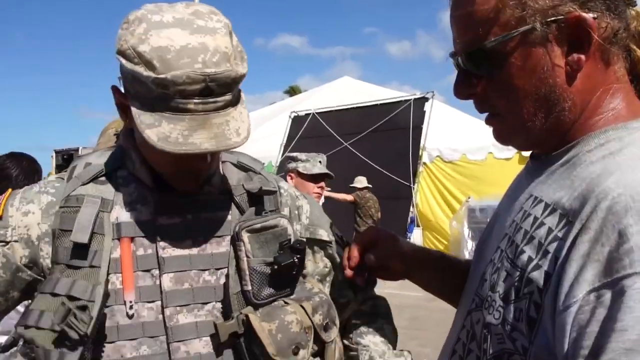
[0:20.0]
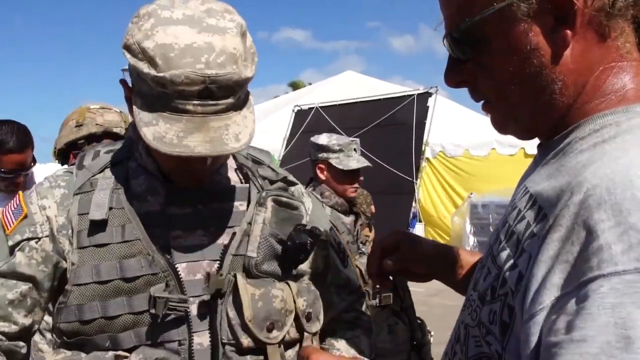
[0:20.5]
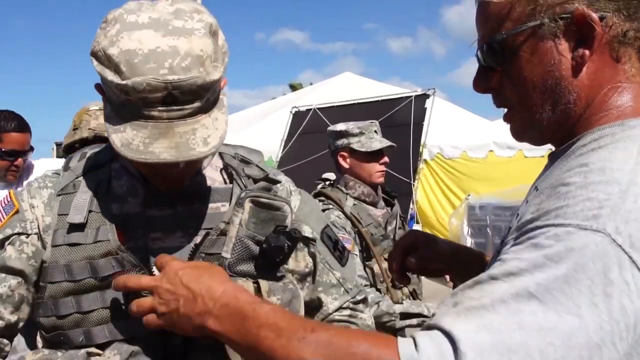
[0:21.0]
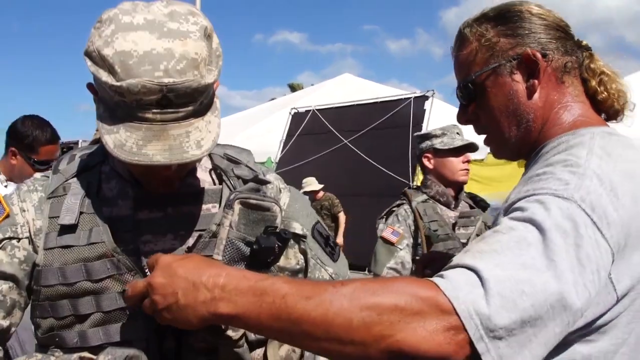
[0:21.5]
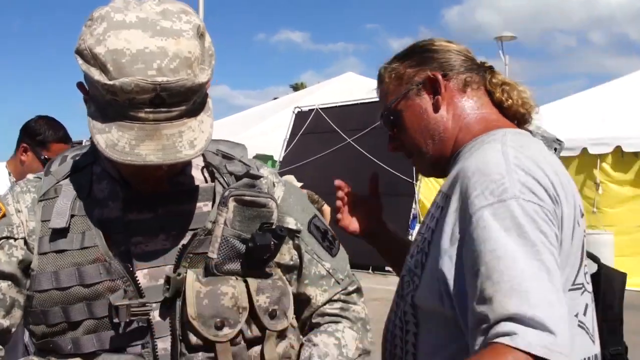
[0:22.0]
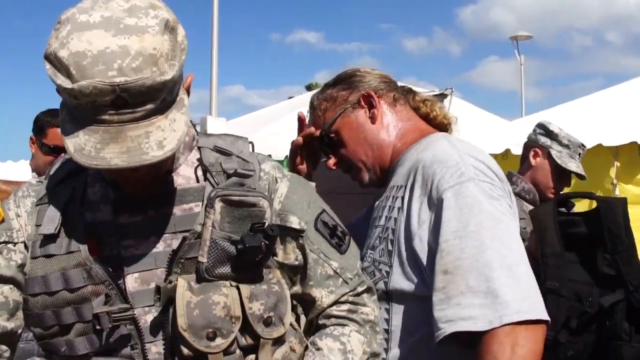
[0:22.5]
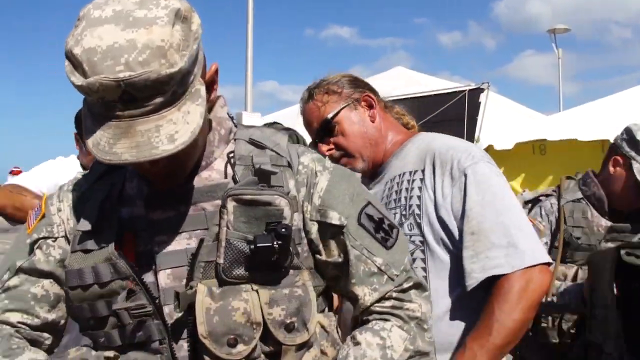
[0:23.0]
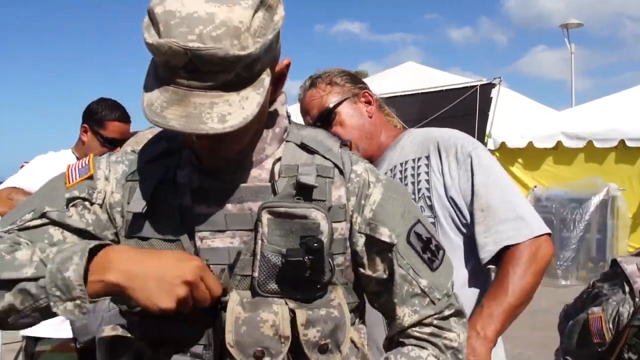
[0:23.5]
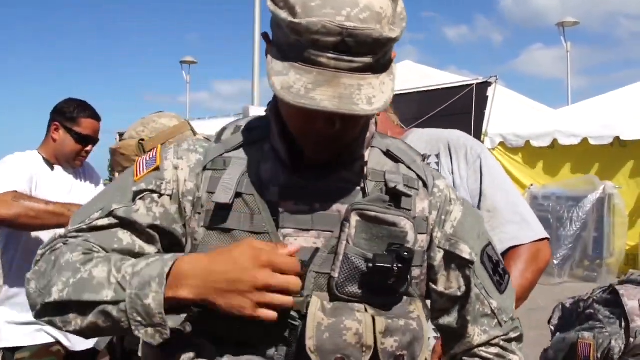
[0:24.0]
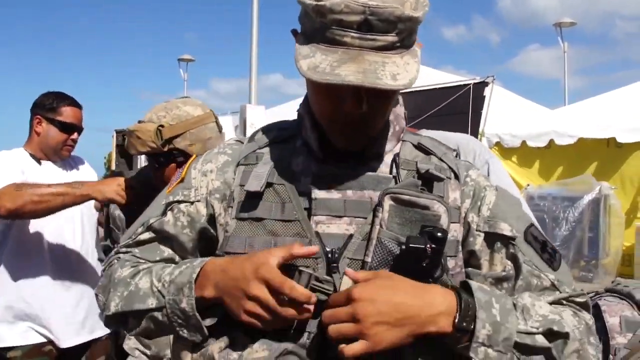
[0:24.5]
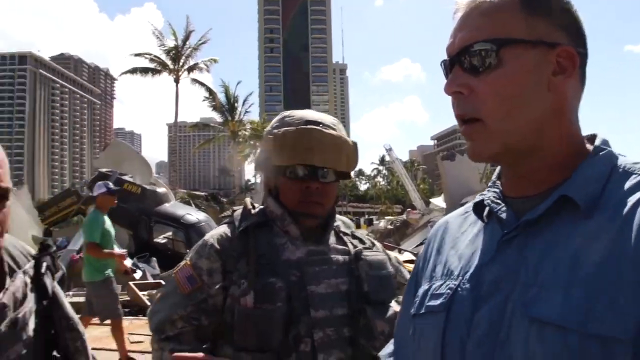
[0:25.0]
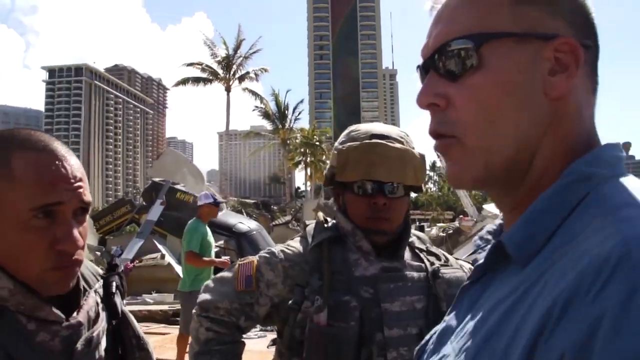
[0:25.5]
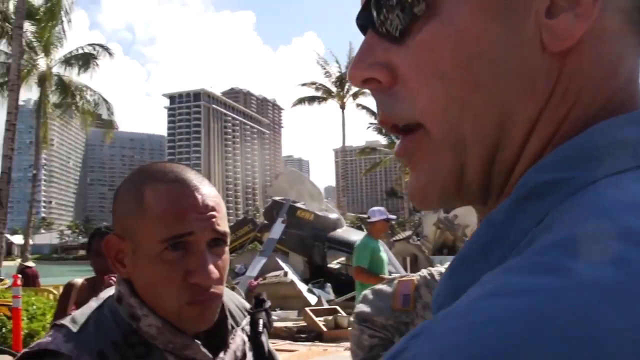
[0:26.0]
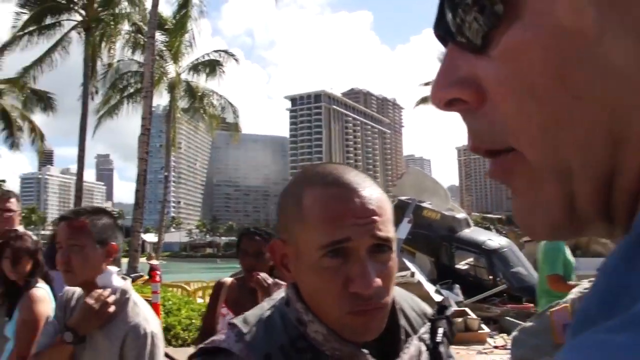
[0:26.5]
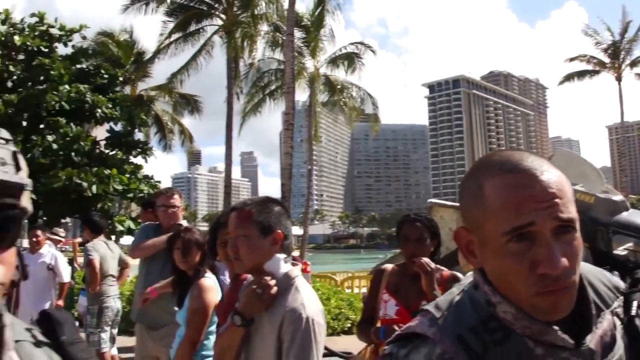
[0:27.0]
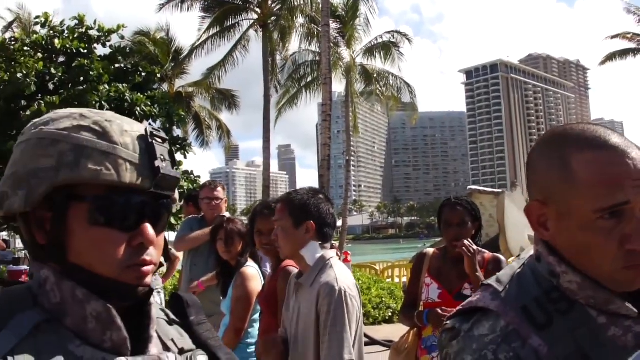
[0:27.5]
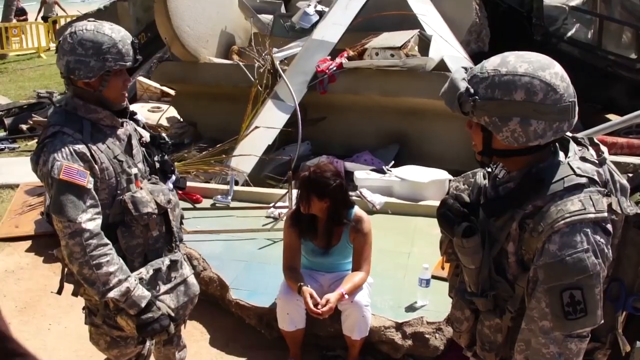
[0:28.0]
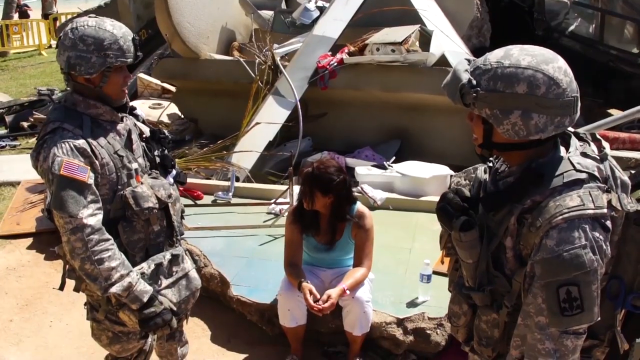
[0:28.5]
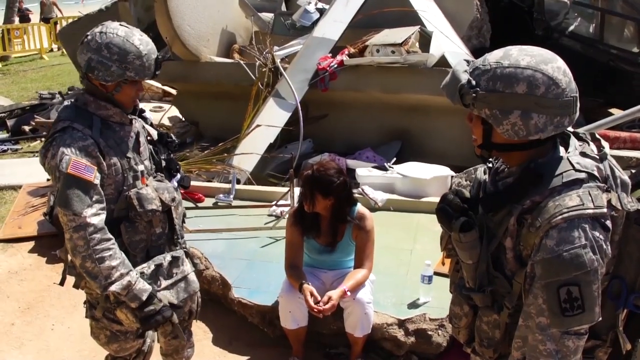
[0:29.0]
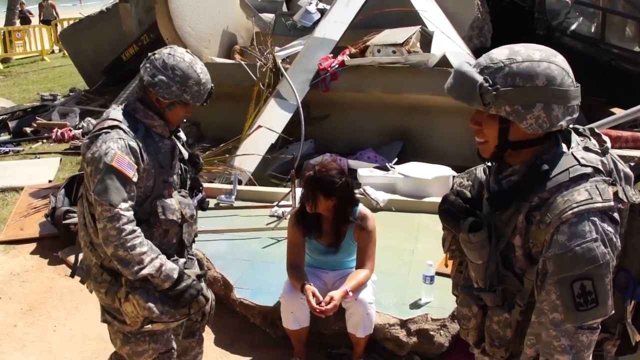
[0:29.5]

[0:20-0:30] Soldiers help people who appear to be wounded, walking past barricades of a police line. There are a lot of people everywhere. The people seem to be struggling to walk, with their arms over the soldiers' shoulders as the soldiers support them while they walk somewhere. The video cuts to a darker-complected man who is just standing there, kind of surveying everything. In the background behind him are what appear to be patients, with IV stands running to them. The nearest patient has his head wrapped up and wears some sort of orange suit while a nurse in a gray shirt and a white hat looks after him. They are in front of, or kind of under, a tent with a red ribbon around the top that says "immediate." The video then cuts to more soldiers and HFD personnel, presumably Hawaii Fire Department. It cuts again to more soldiers who look like they are gearing up, putting on vests and similar gear, while someone helps them get everything situated and zipped.